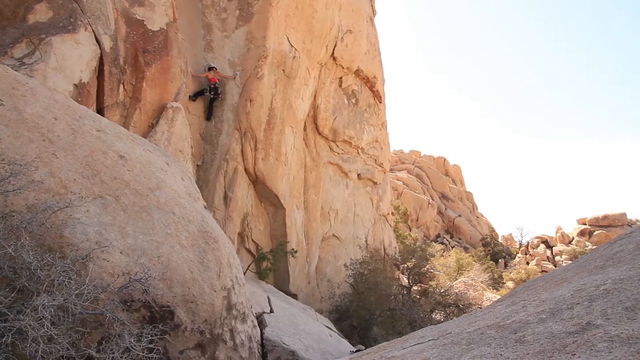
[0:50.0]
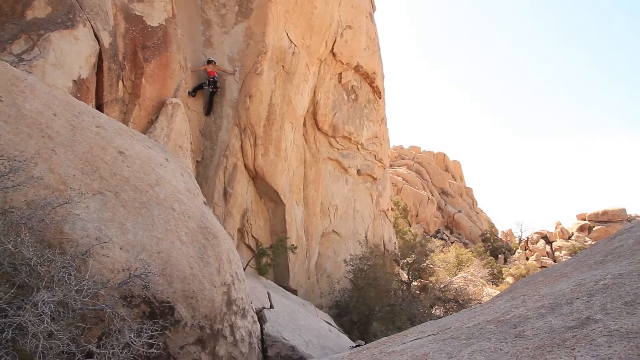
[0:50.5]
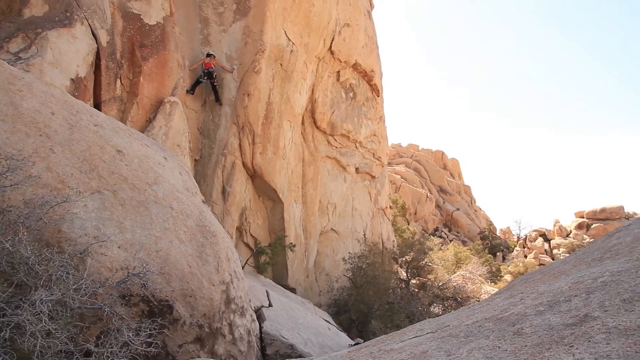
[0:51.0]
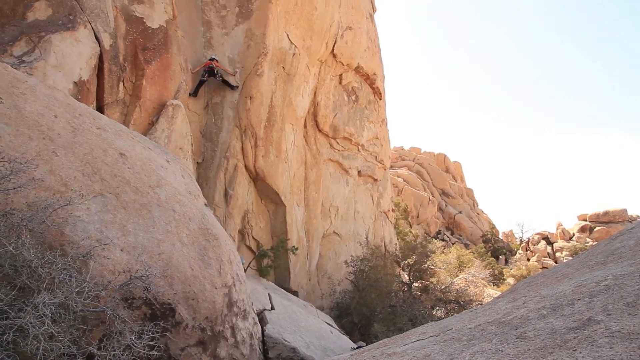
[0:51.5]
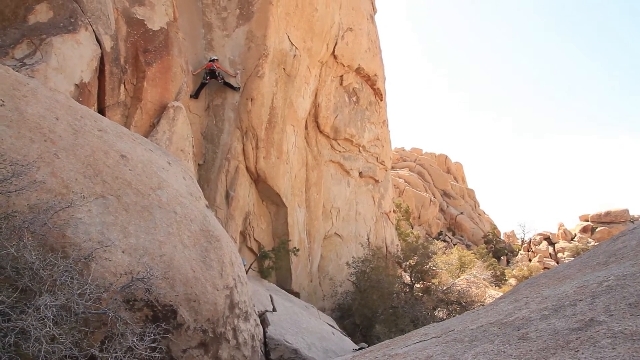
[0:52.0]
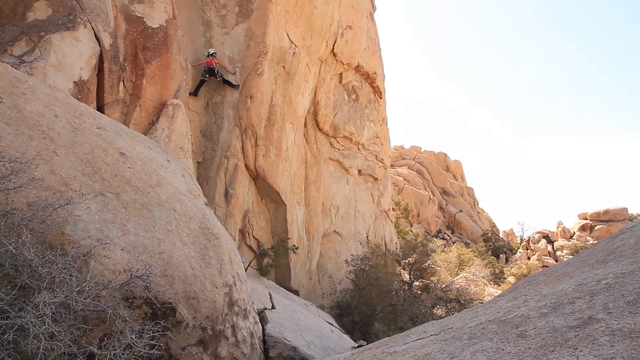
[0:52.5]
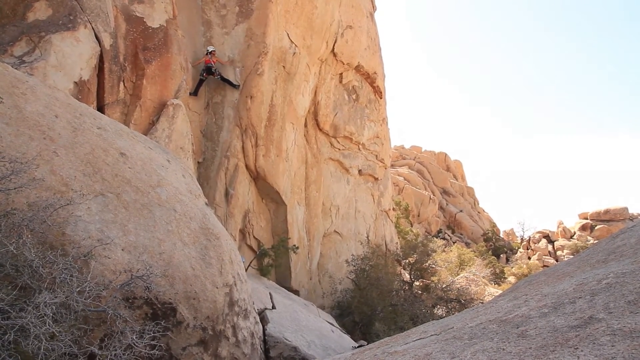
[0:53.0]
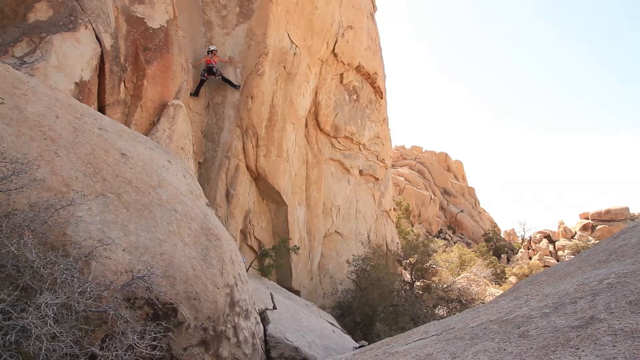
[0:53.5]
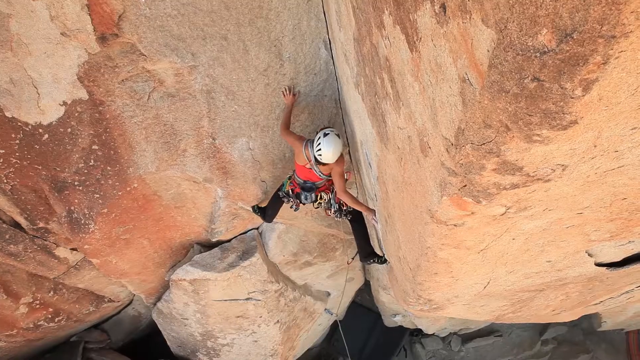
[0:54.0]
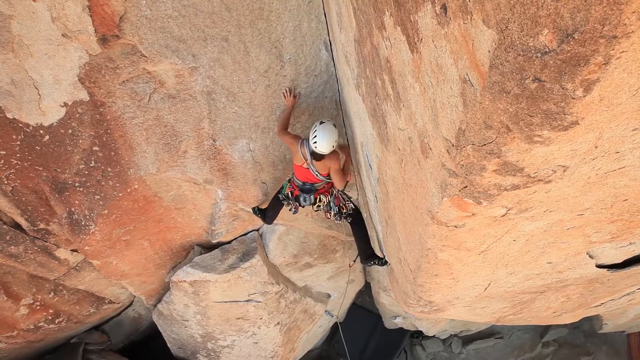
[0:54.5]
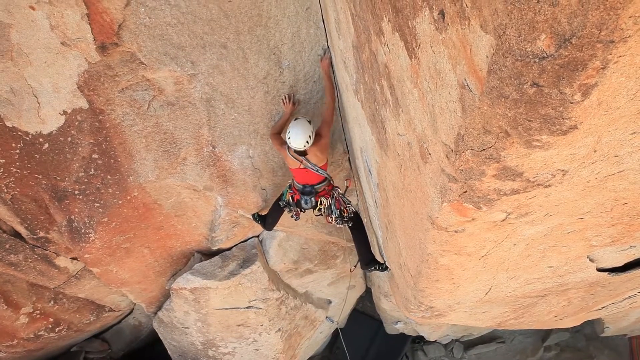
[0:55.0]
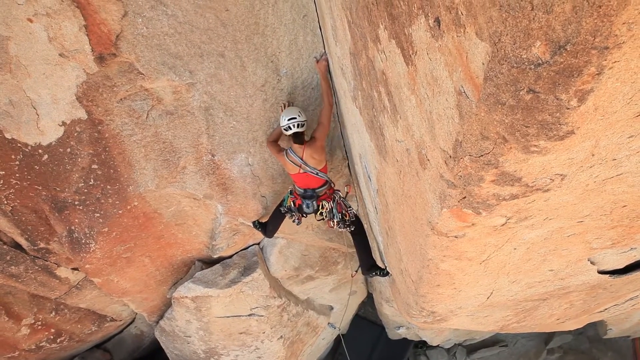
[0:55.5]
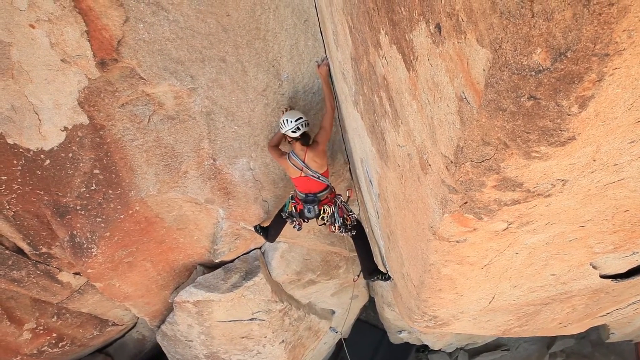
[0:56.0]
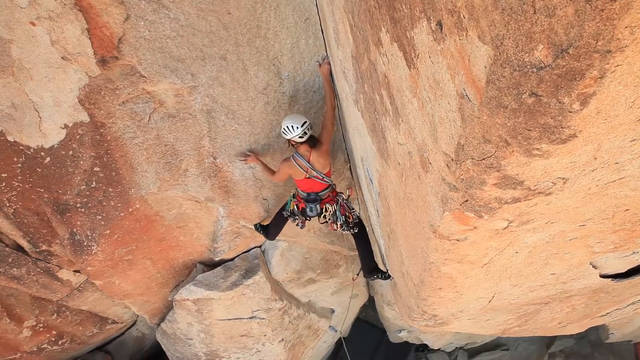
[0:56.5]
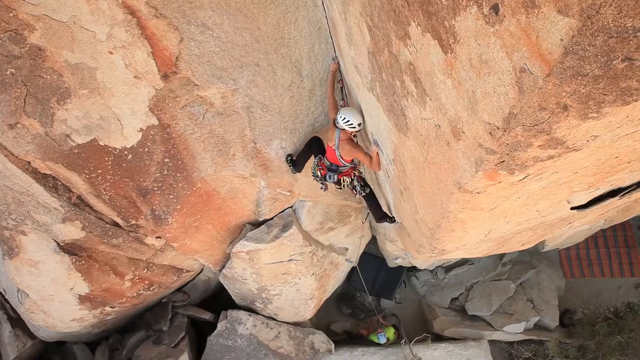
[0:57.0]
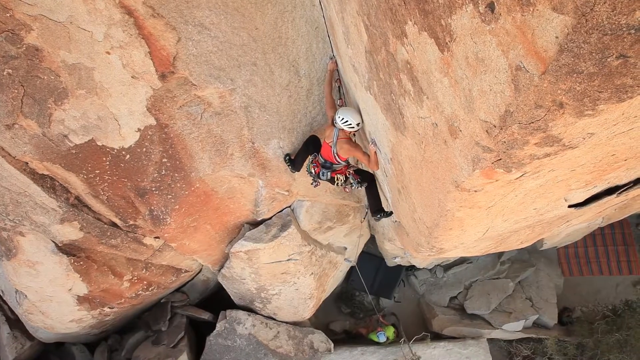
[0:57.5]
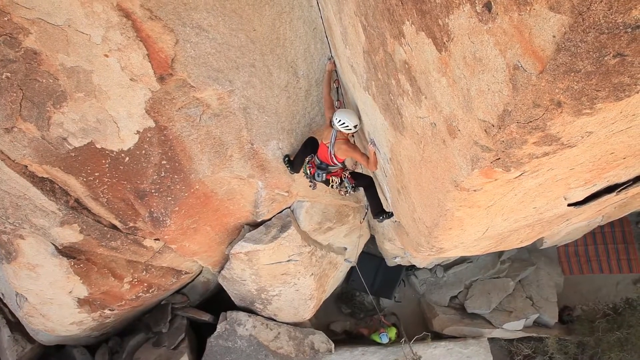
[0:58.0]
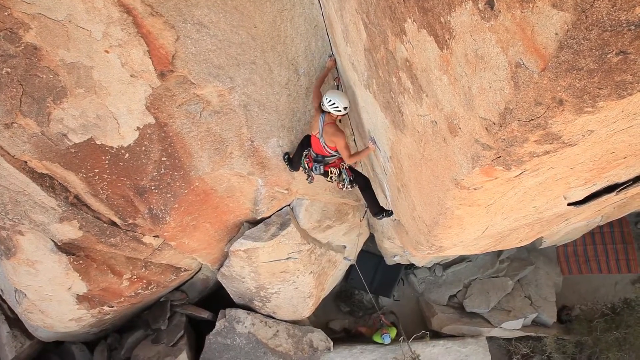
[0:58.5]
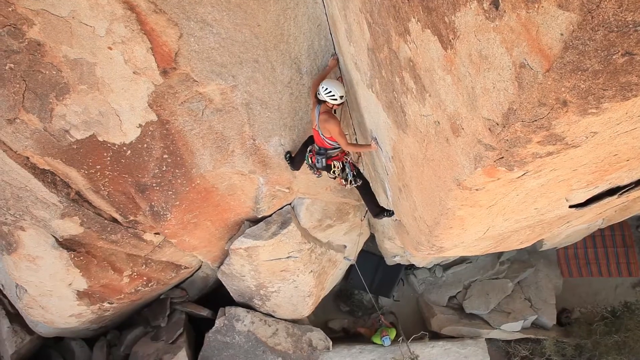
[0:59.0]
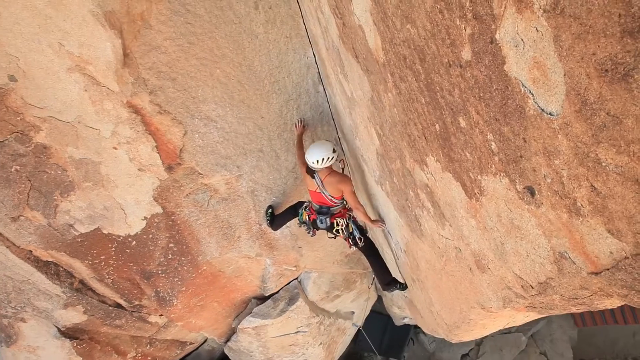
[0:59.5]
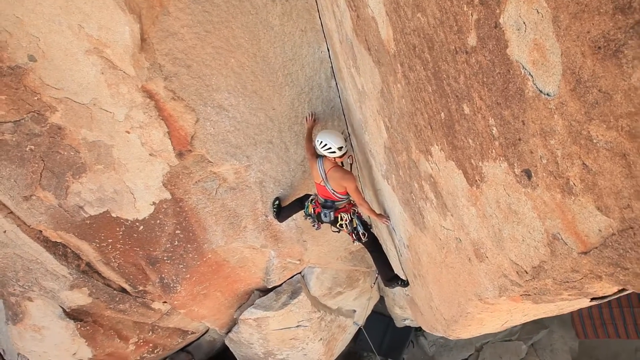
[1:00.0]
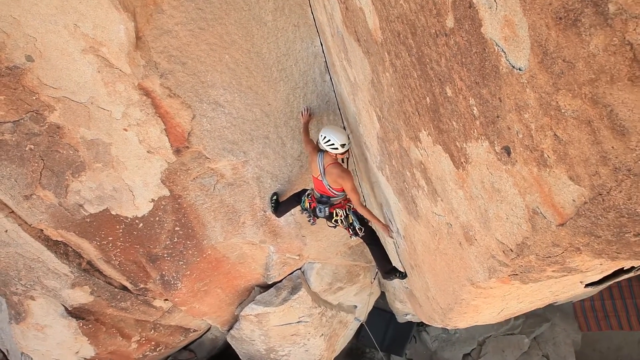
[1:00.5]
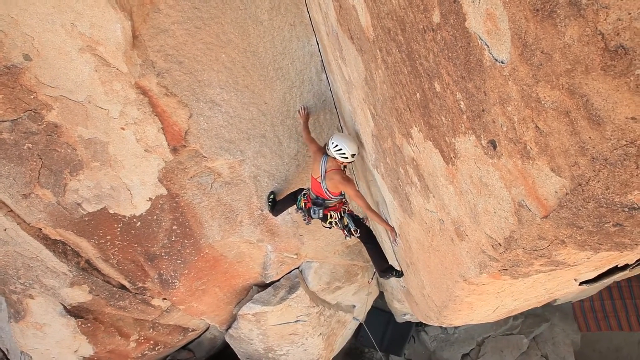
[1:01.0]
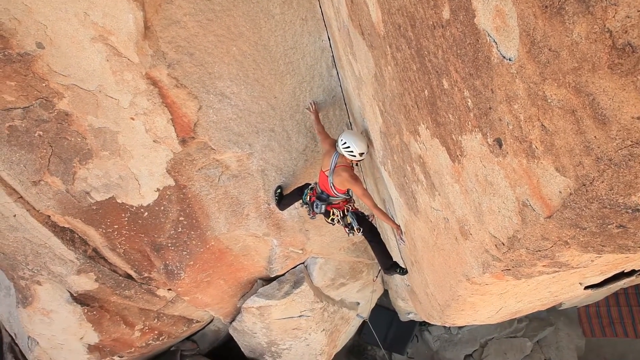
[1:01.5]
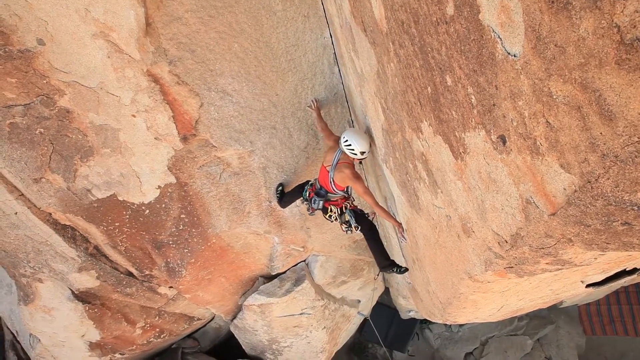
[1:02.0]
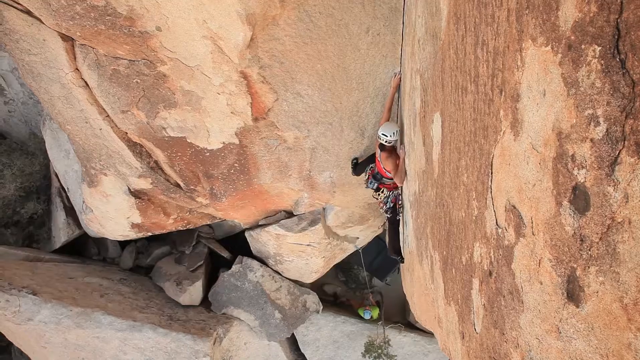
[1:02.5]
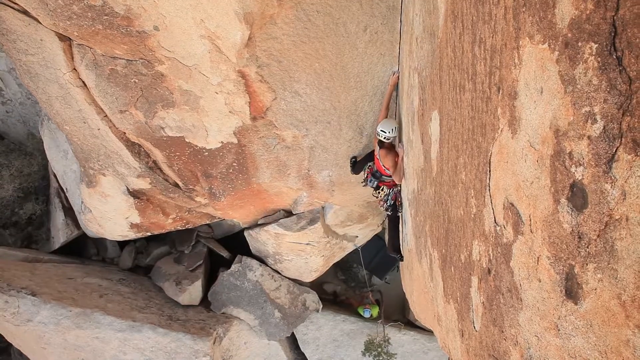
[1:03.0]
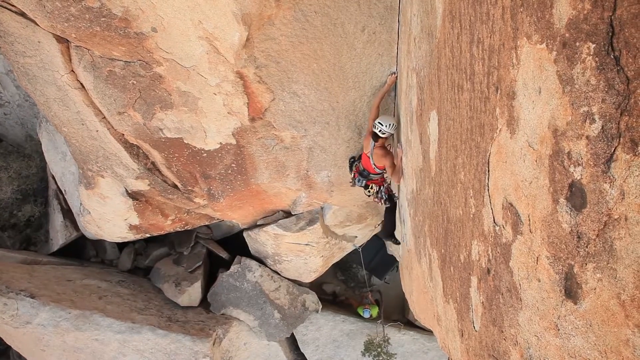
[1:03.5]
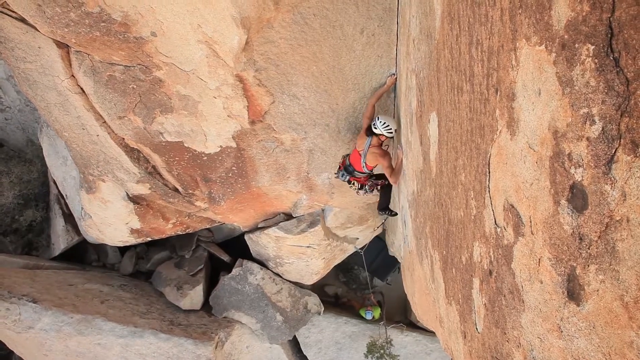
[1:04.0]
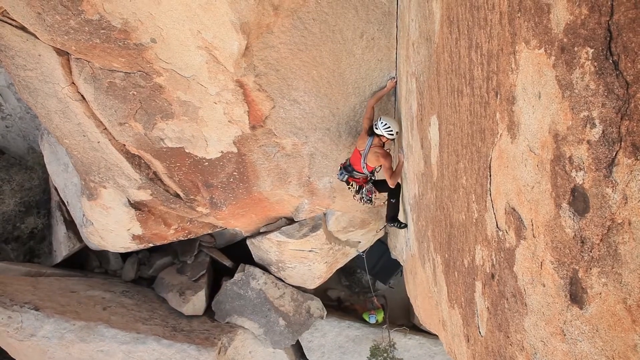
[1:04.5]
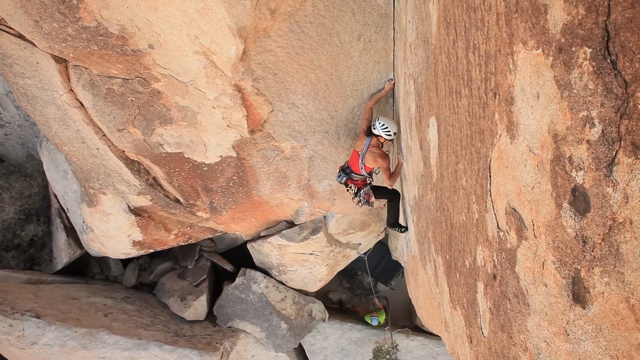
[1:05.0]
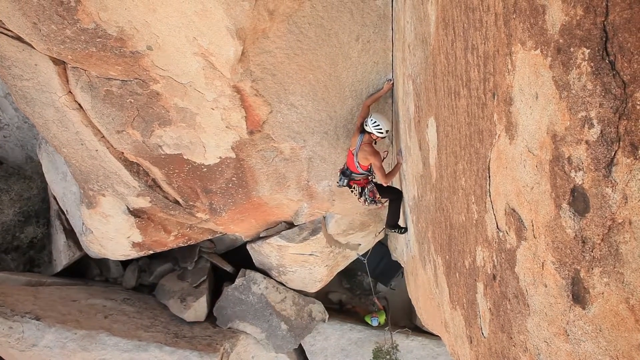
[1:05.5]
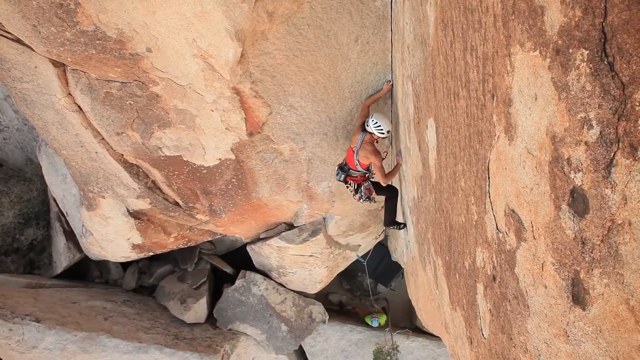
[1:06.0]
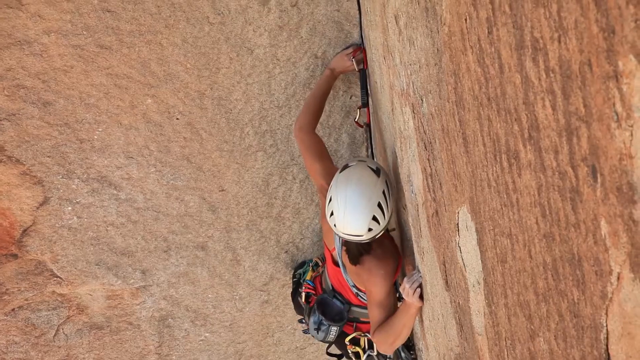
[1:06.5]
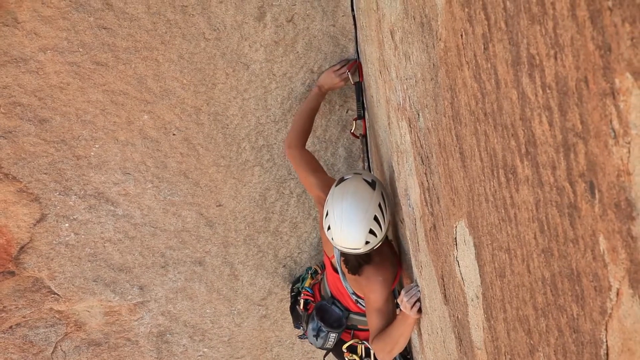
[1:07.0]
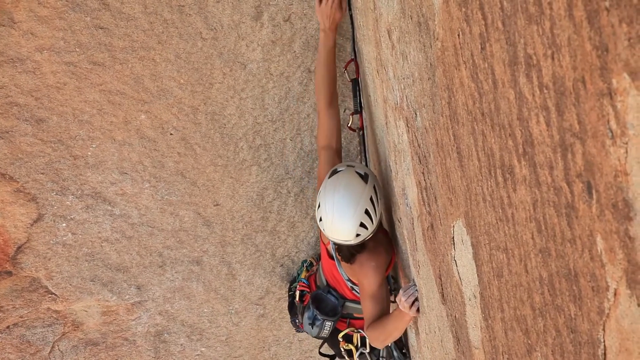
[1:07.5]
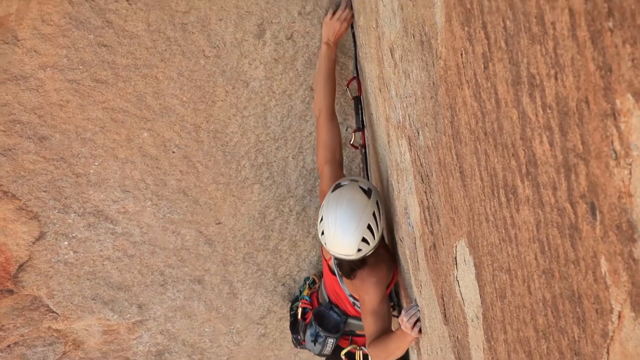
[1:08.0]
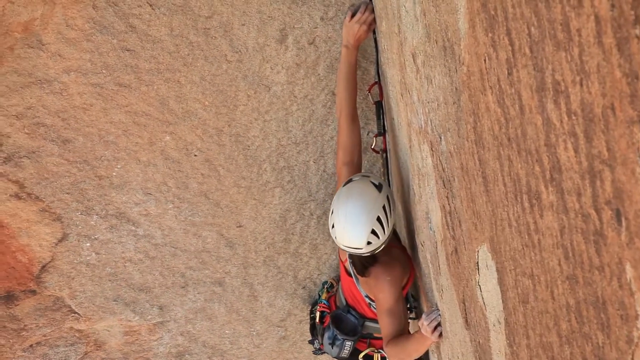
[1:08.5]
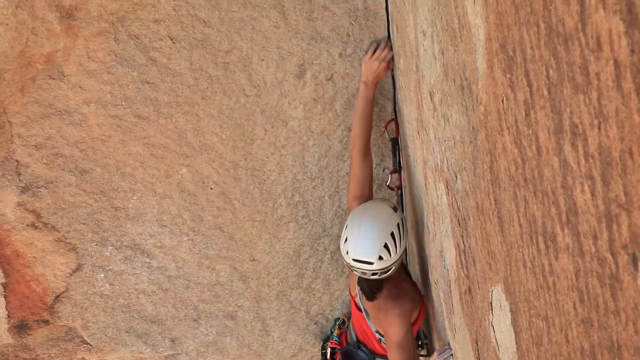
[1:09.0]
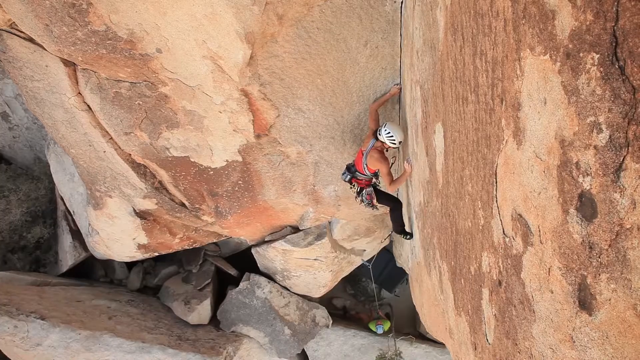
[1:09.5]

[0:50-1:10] A woman climbs a rock and is quite high up. It is daytime, with a blue sky and sunlight, and there are a lot of rocks, with many trees and shrubs next to her. She slowly goes higher and higher, spreading her feet to get a good grip. A man below her is on the rope, wearing a yellow or neon green shirt. The woman, in a pink top, black pants and white helmet, makes her way up the huge rock and looks skilled and experienced.